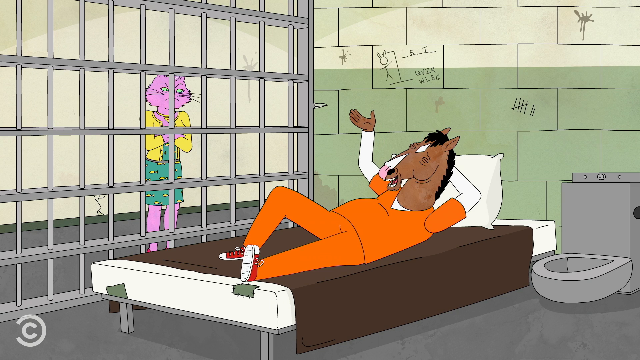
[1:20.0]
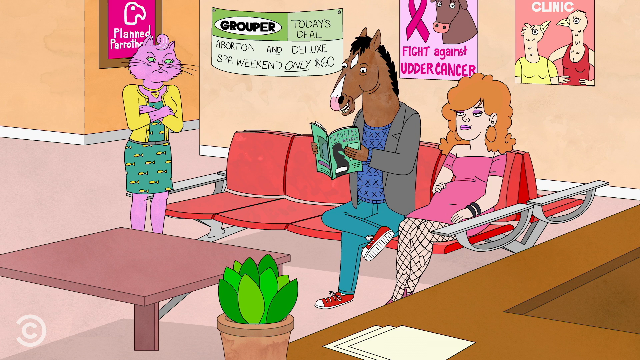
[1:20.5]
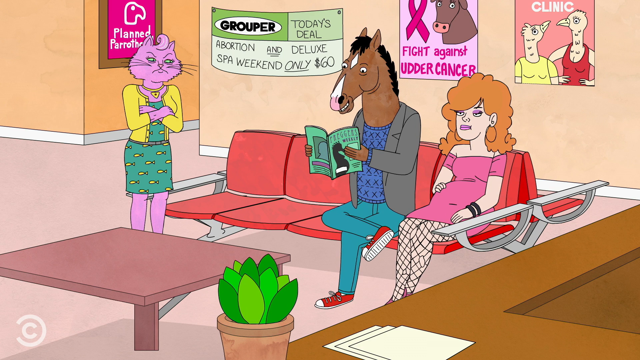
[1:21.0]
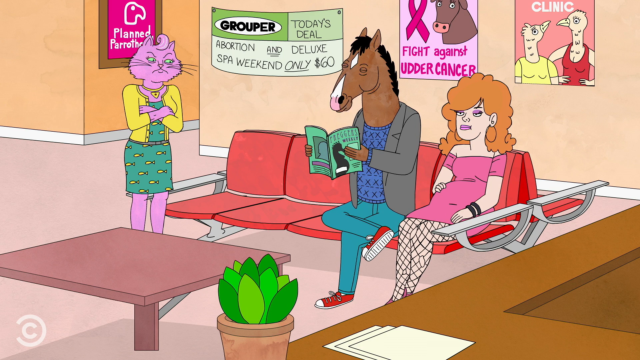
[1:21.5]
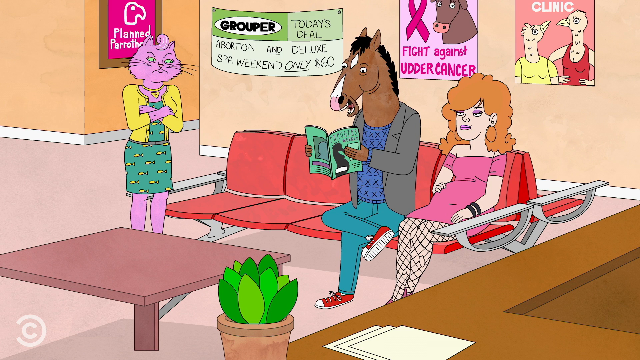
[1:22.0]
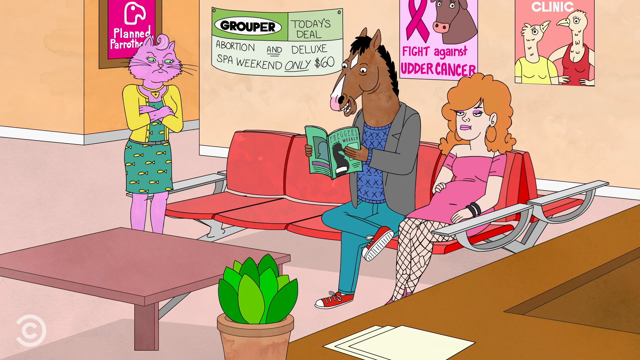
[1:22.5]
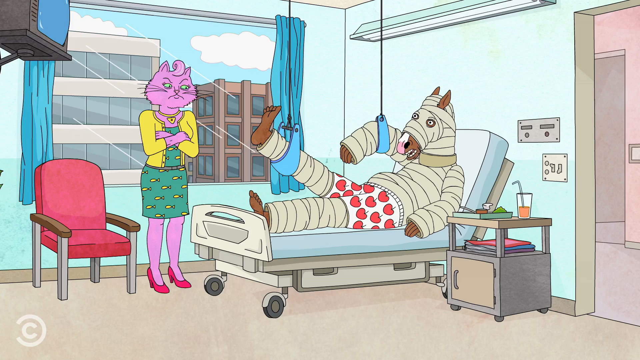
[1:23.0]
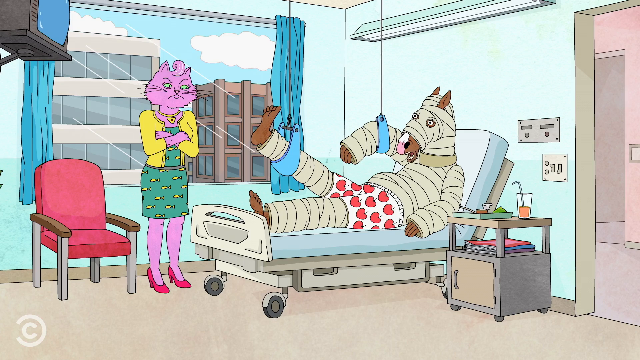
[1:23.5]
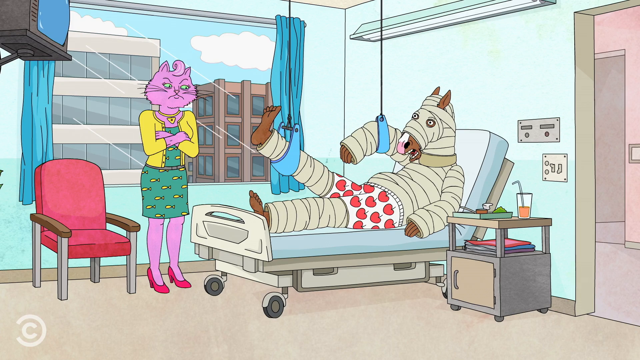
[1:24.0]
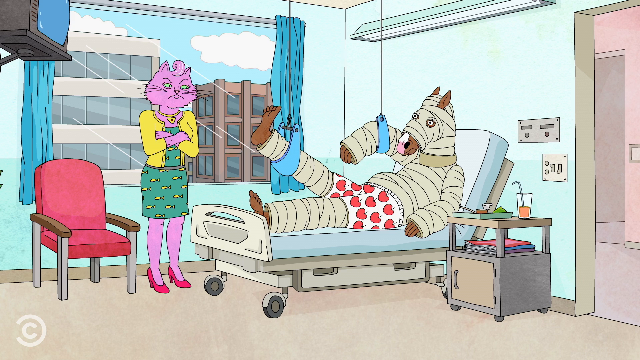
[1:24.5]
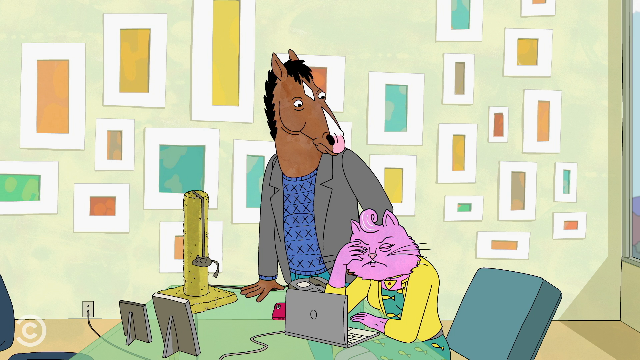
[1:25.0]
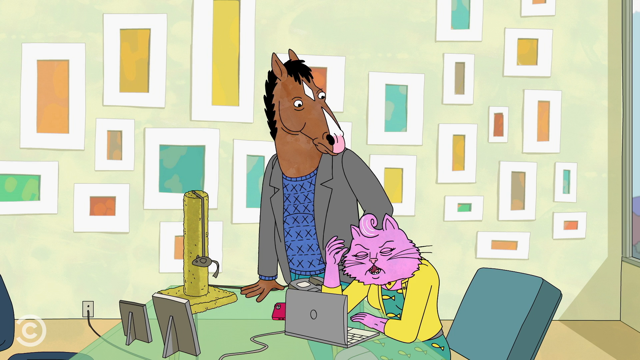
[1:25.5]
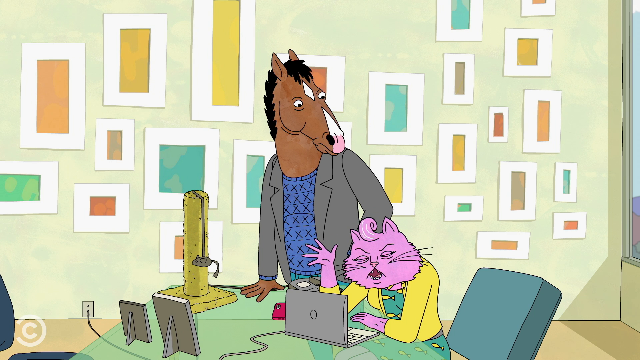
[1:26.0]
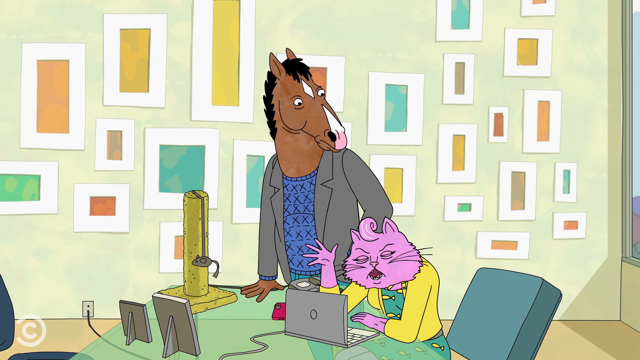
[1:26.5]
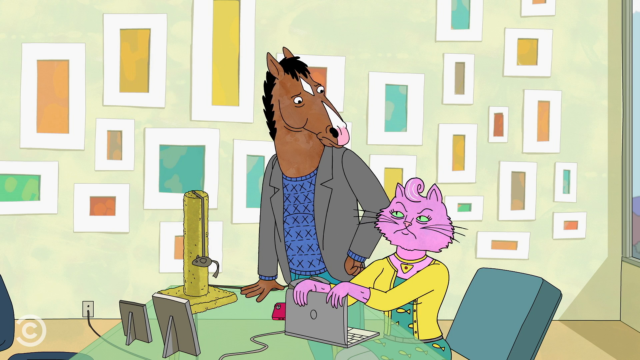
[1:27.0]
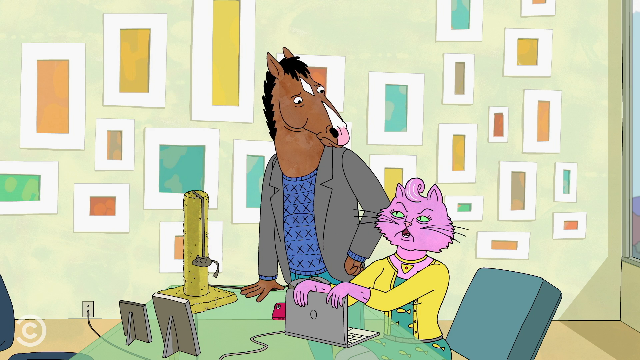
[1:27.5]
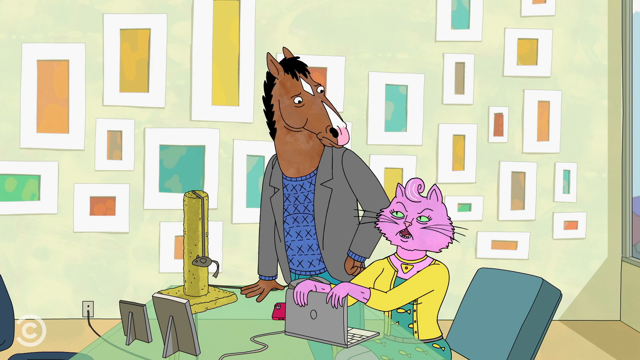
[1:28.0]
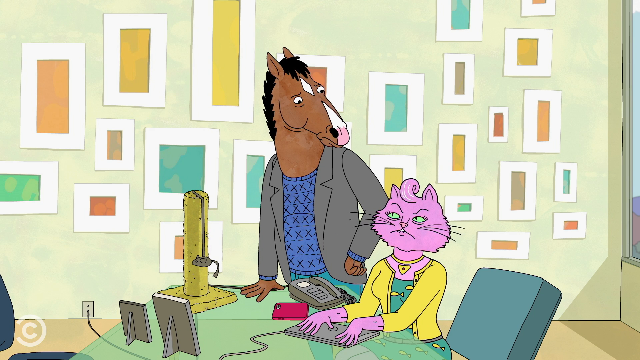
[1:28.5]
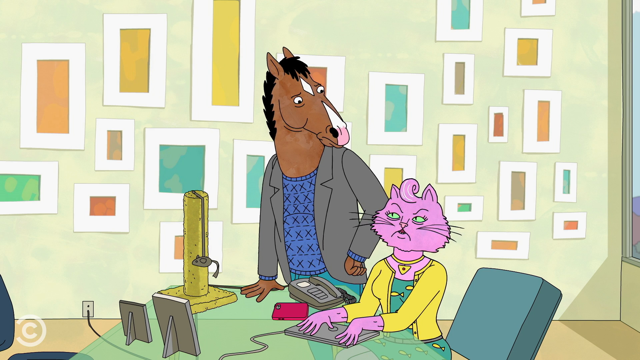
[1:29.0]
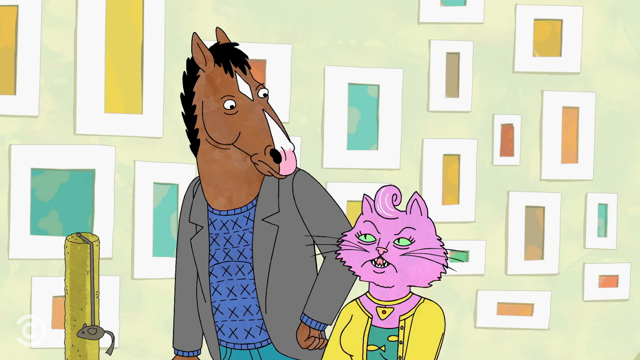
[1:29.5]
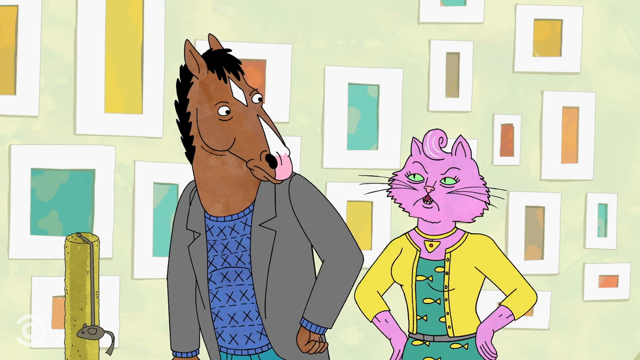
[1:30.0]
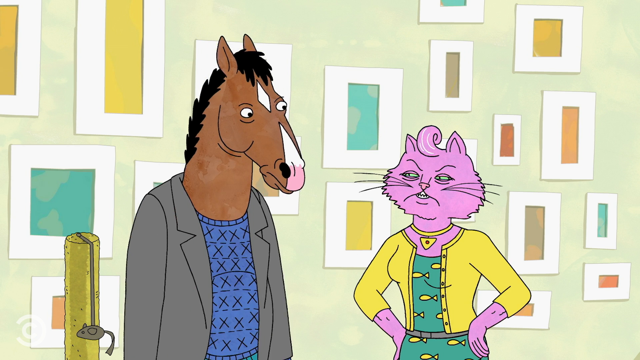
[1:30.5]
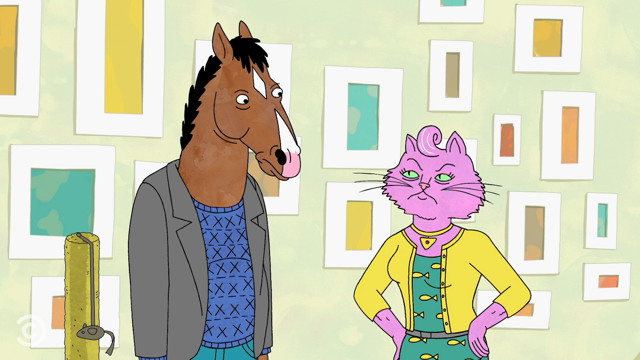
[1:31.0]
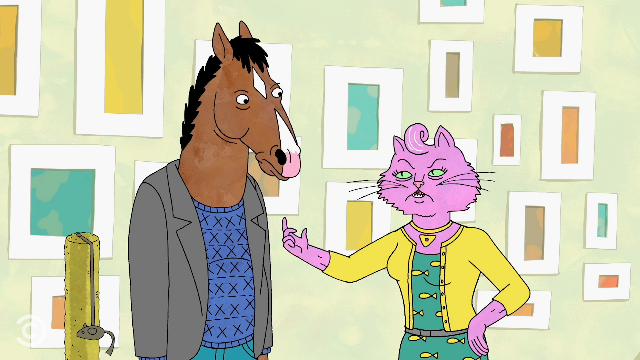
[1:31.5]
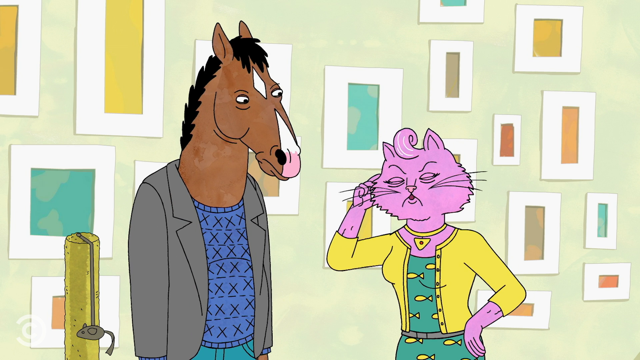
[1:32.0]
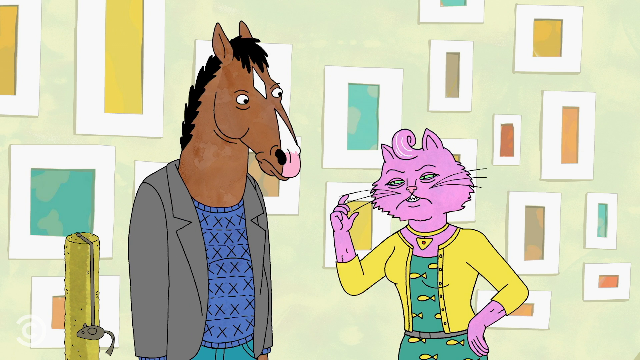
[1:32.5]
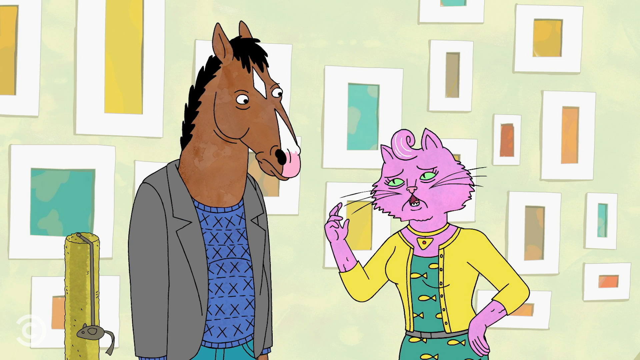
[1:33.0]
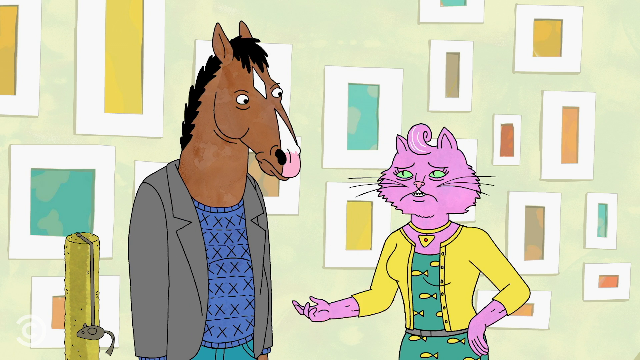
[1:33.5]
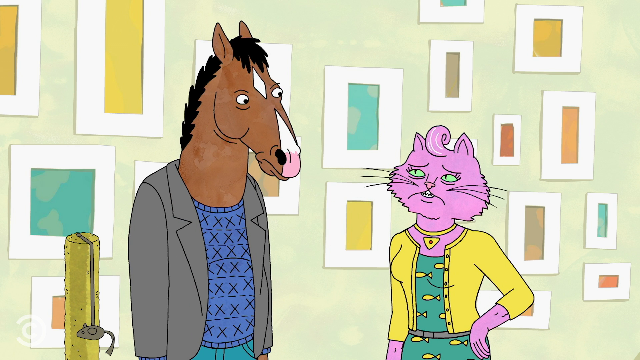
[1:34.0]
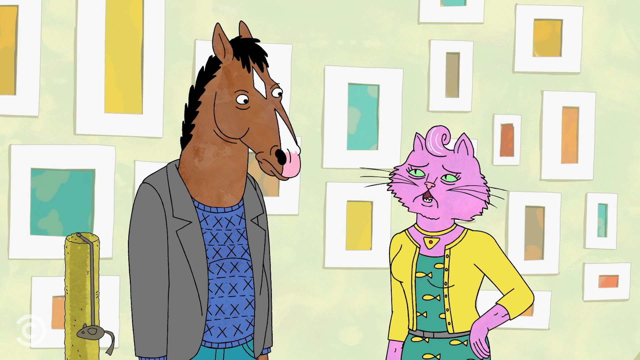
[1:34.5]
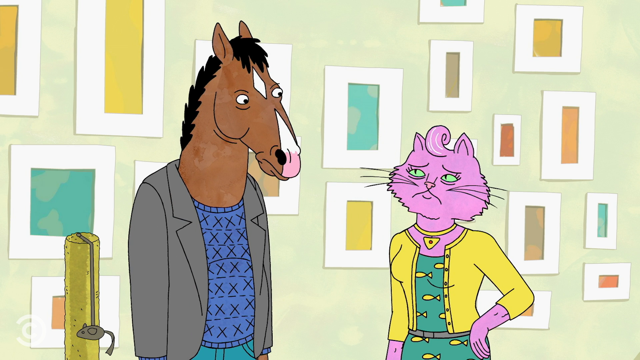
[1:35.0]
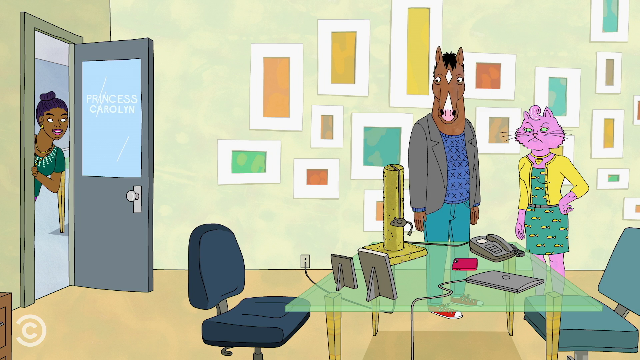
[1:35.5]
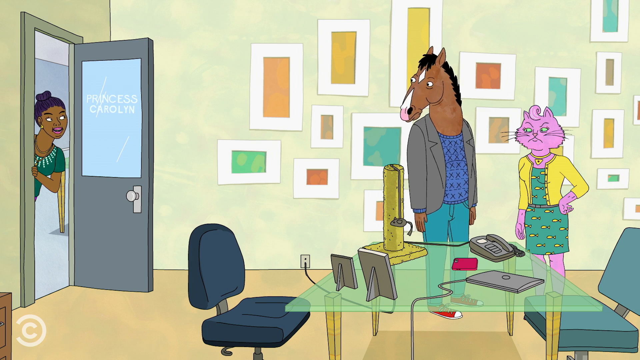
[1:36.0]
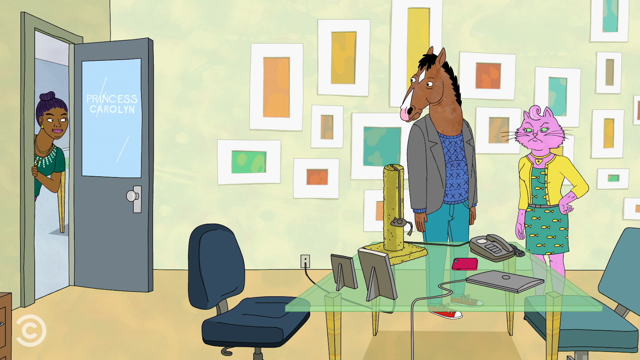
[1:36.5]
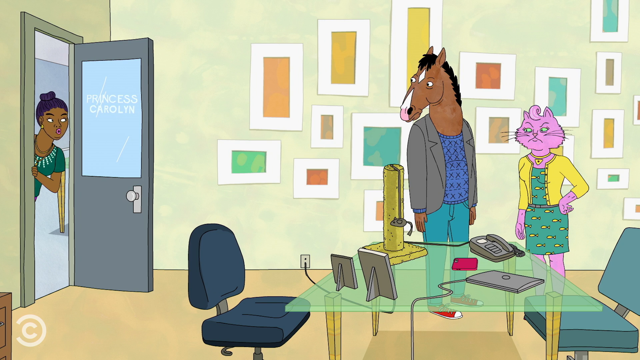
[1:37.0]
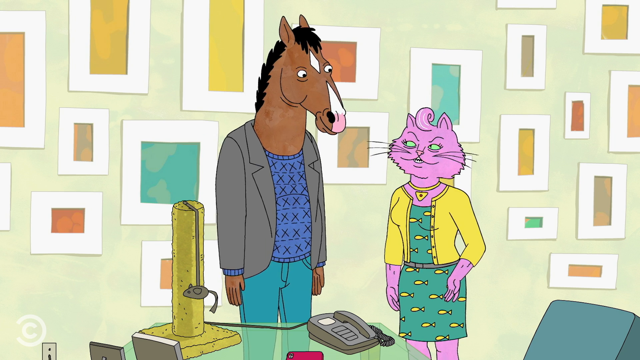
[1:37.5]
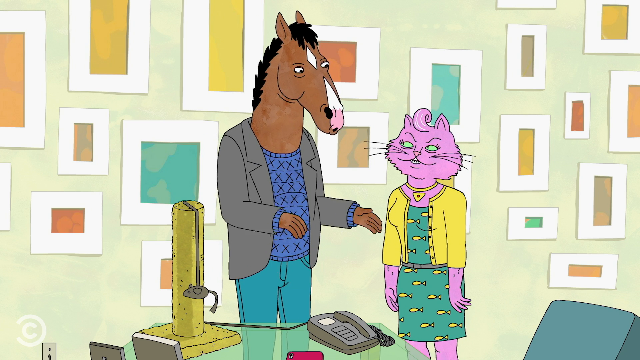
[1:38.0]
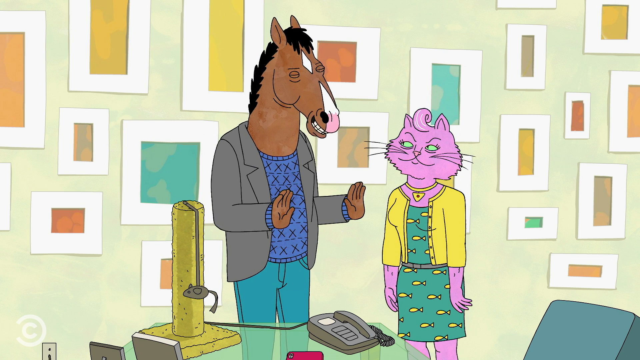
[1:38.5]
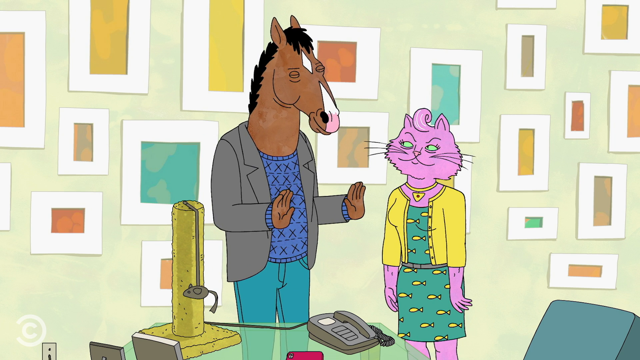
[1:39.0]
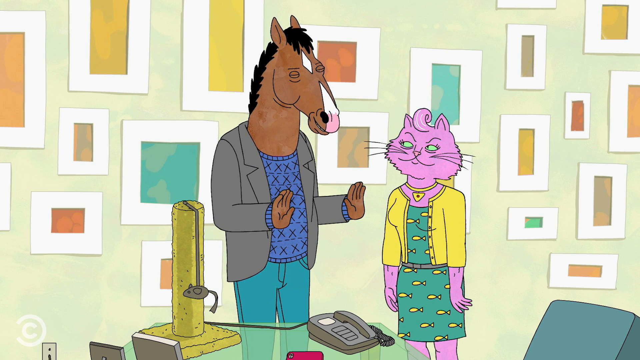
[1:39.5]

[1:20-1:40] The horse lies on the bed, still talking. The video cuts to what looks like a doctor's waiting room. Four seats are in the middle of the room, a green plant is at the bottom of the screen, and a pink table is to its left. Above the pink table, the cat stands next to the four seats, looking toward the horse, who sits on the red seat reading a magazine with one leg crossed over the other. Next to him is a woman wearing fishnet tights, black armbands and big orange hair. Behind them is a wall of posters: on the right, two chickens with "clinic" written on it; to its left, a bull with a ribbon next to it and "fight against udder cancer"; to the left of that, a banner reading "Kuba, today's deals, abortion spa weekend". A corridor leads off to the right, and behind the cat's head is a poster reading "Planned Parenthood". The horse talks while looking at the magazine. The video cuts to a hospital room where the horse lies in bed, bandaged from head to foot, wearing boxers with red hearts, his arm in a sling and his leg elevated. A window shows other buildings outside, a TV is at the top left of the screen, and there are blue curtains. The cat stands with her arms crossed, looking at the horse, still angry. The video cuts back to the office. The cat looks very angry with her arm resting on the table, while the horse, his hand still on the table, looks down at her with concern. She puts her hands on the laptop and closes it while talking to him, stands up, puts her hand to her head and continues an intense conversation with the horse, who is to her left. The view pans out as a woman in a green top appears at the office door, only her head and torso visible. The cat and horse turn to look at her, then back at each other. With just the two of them in the scene, the horse holds his hands up in front of him as if trying to explain something, then leans down and points at the cat.